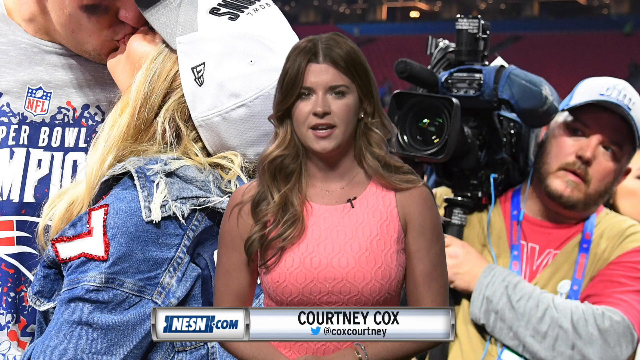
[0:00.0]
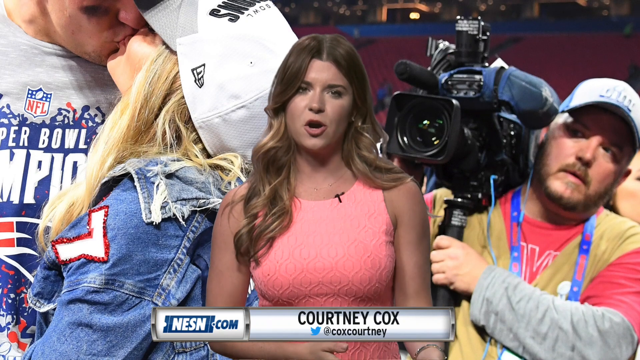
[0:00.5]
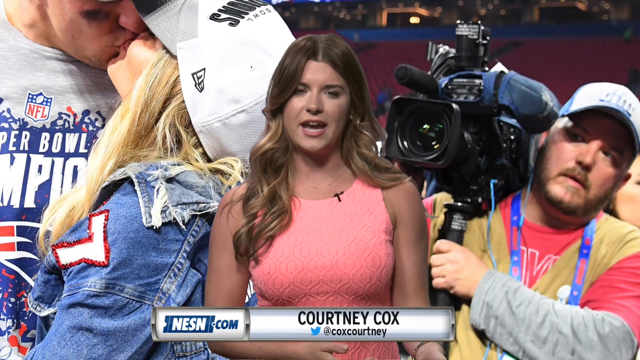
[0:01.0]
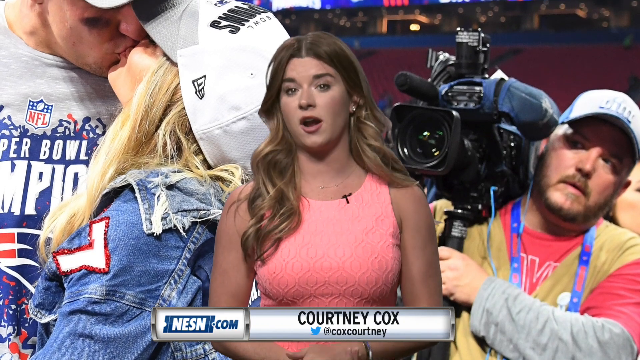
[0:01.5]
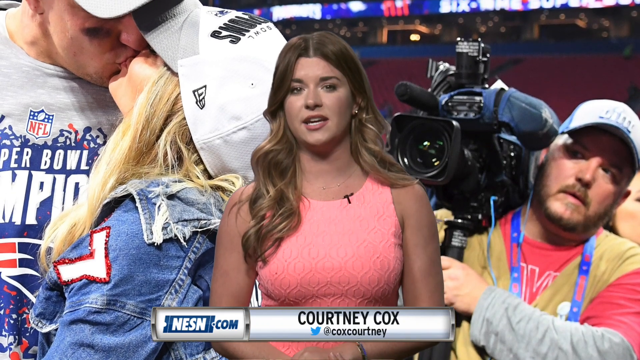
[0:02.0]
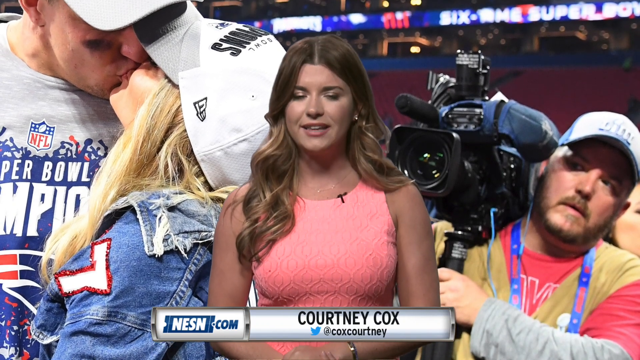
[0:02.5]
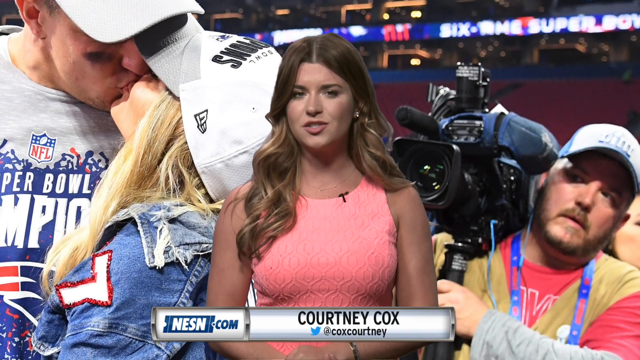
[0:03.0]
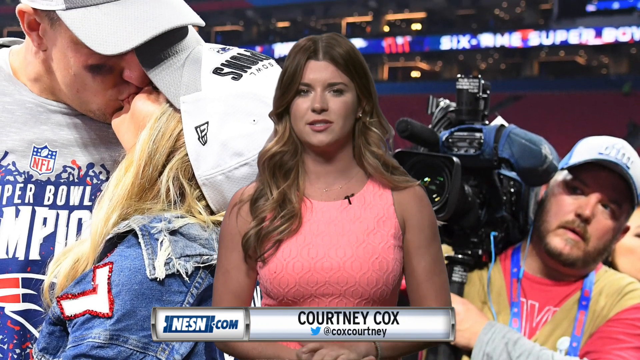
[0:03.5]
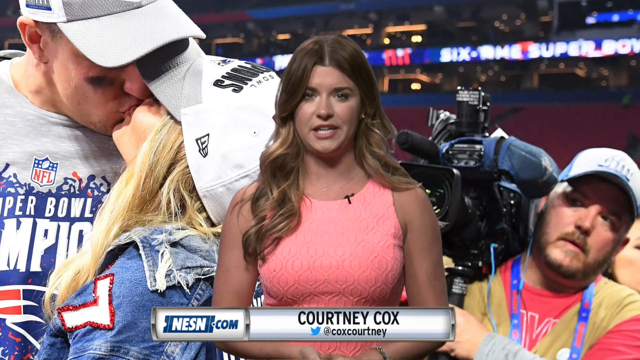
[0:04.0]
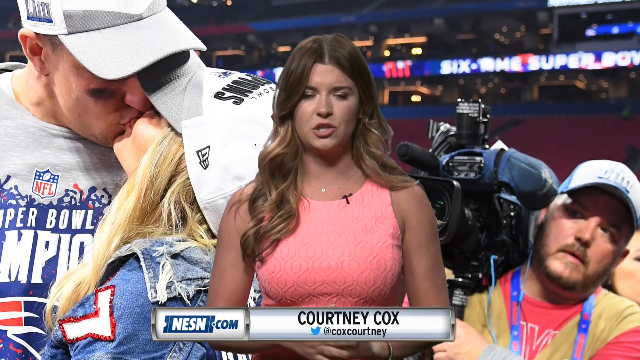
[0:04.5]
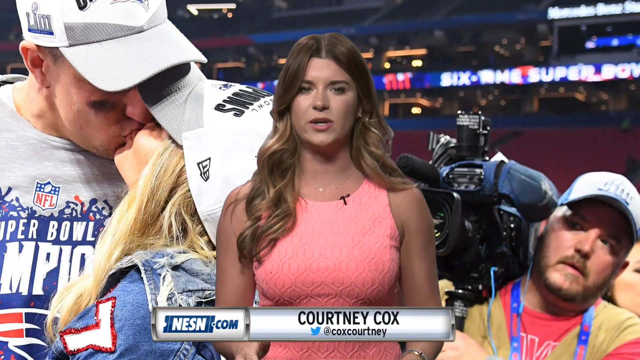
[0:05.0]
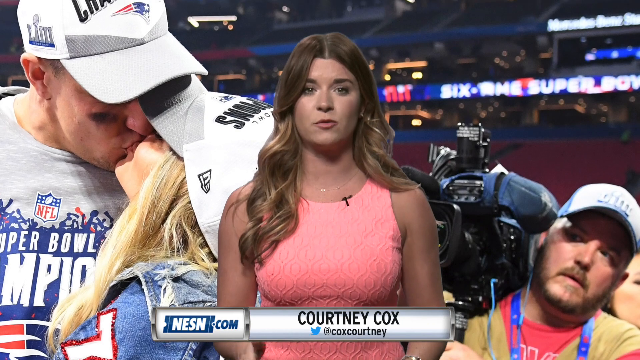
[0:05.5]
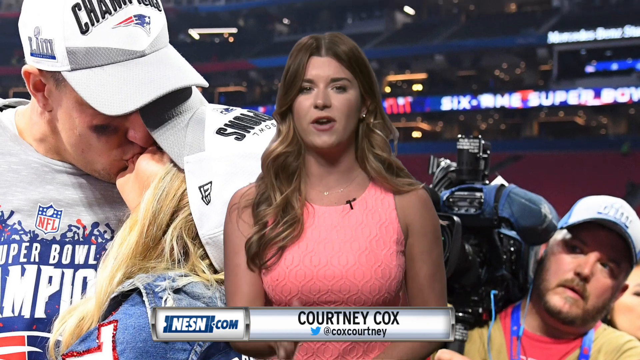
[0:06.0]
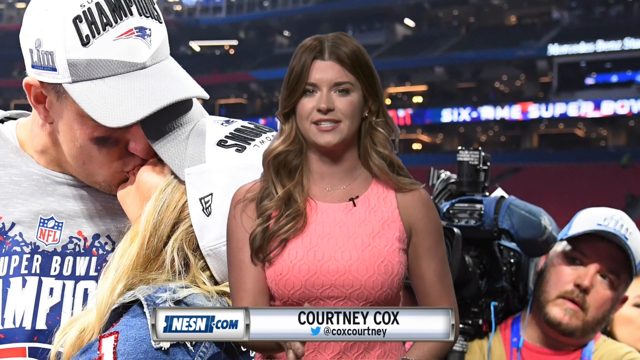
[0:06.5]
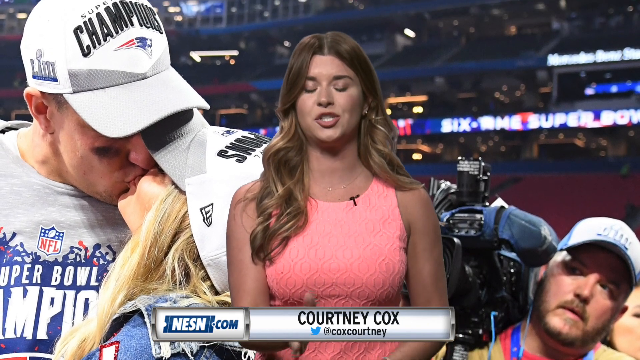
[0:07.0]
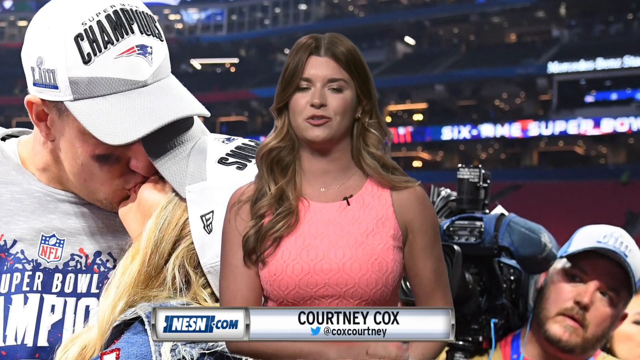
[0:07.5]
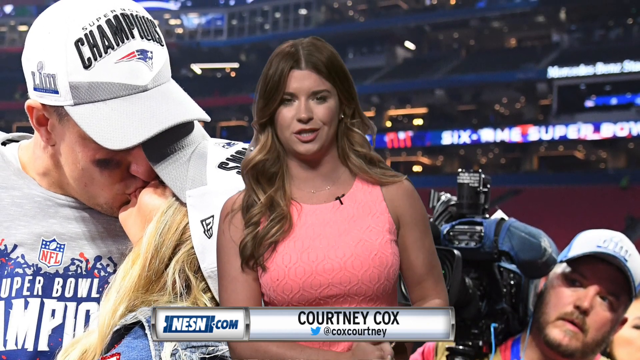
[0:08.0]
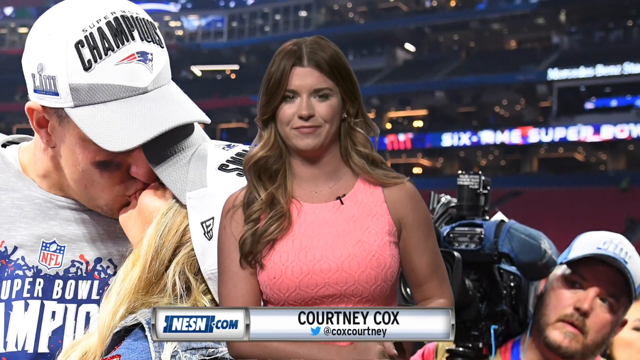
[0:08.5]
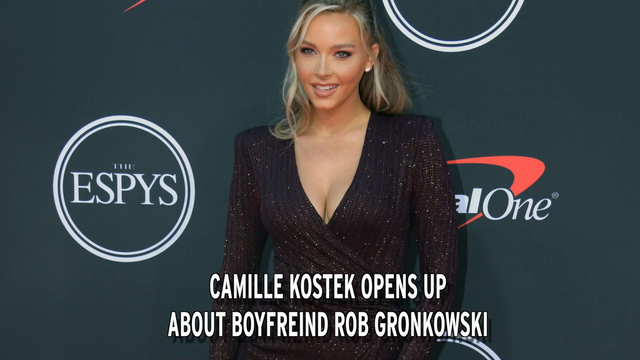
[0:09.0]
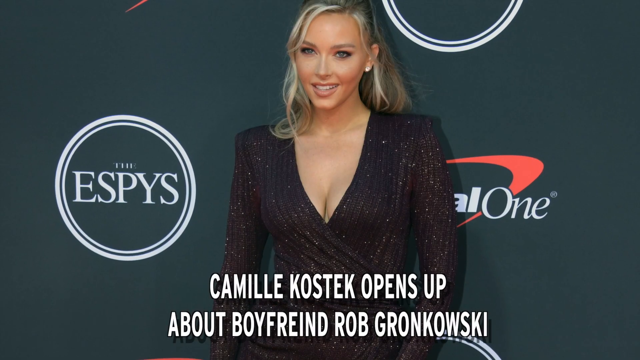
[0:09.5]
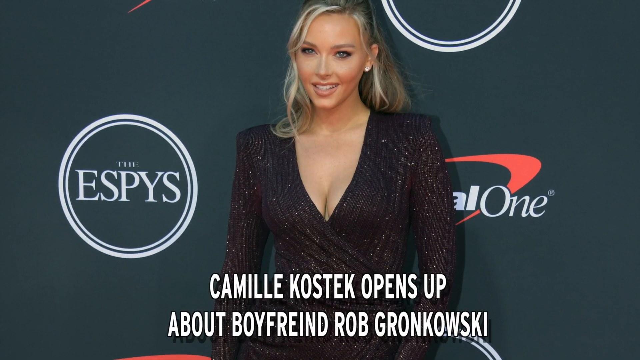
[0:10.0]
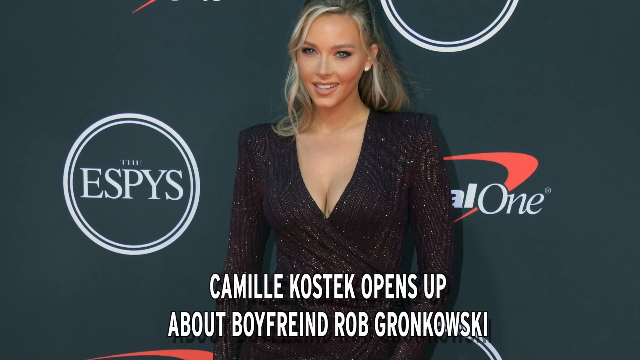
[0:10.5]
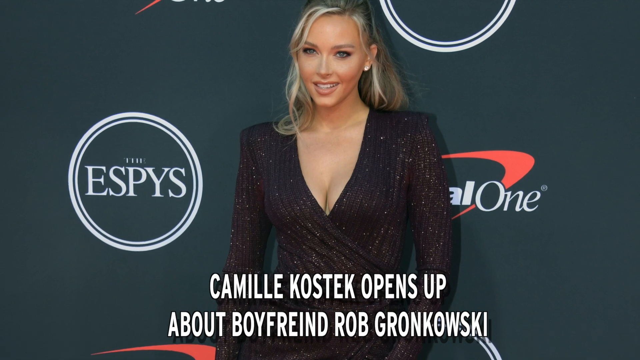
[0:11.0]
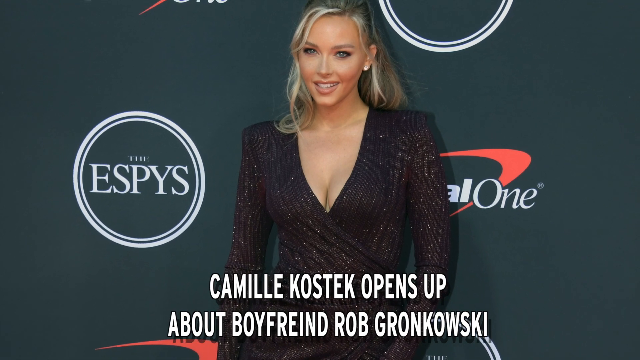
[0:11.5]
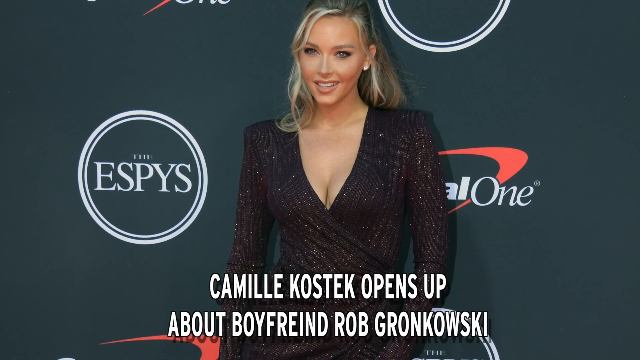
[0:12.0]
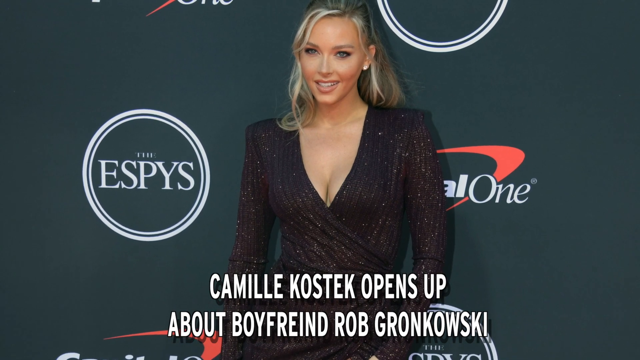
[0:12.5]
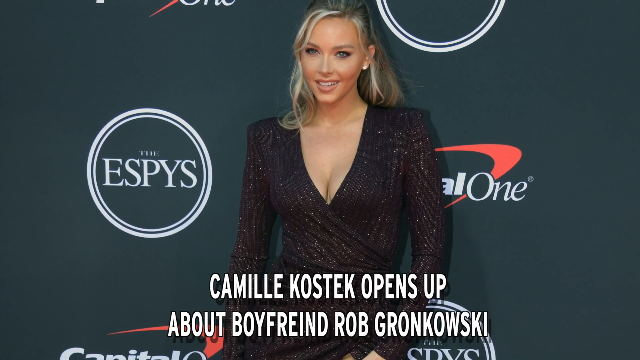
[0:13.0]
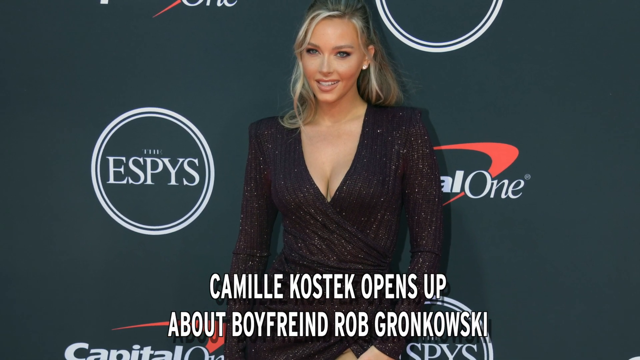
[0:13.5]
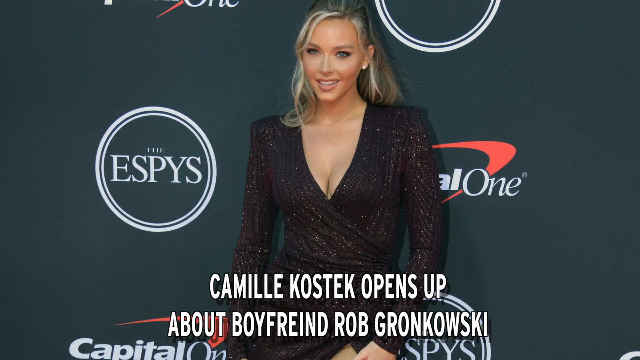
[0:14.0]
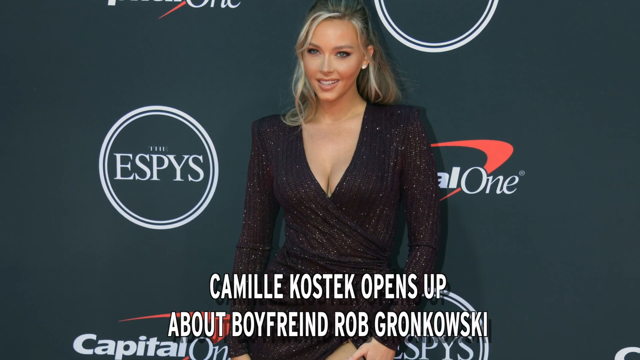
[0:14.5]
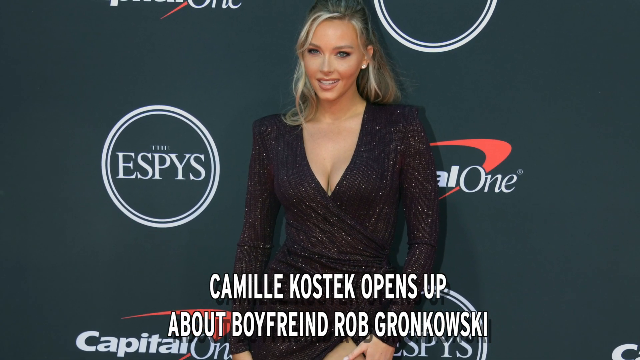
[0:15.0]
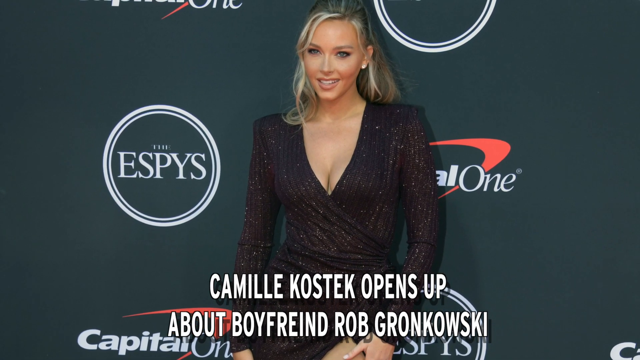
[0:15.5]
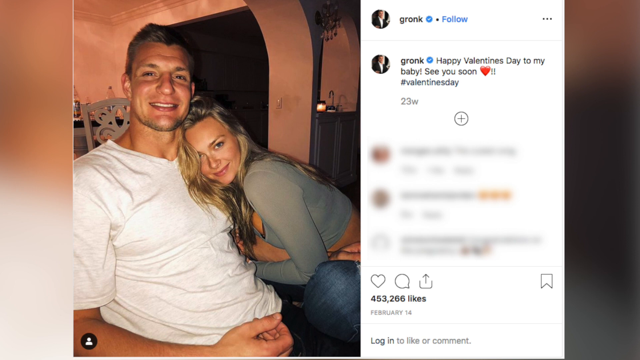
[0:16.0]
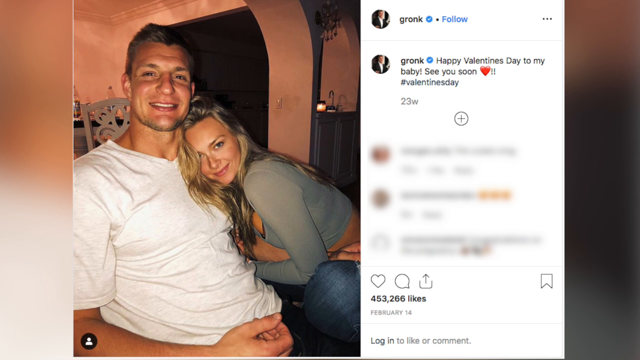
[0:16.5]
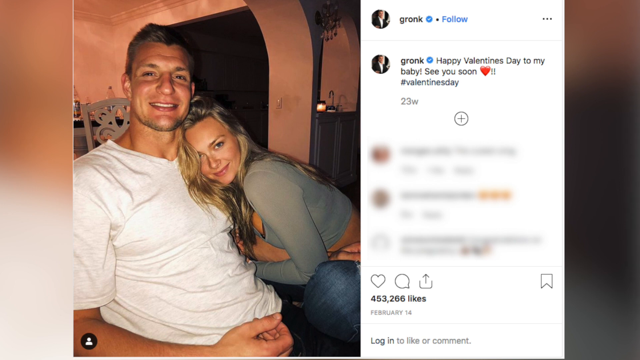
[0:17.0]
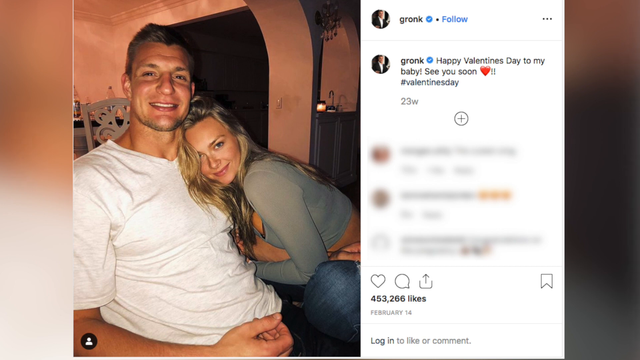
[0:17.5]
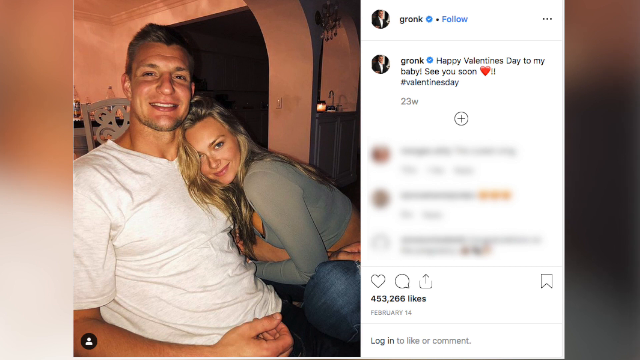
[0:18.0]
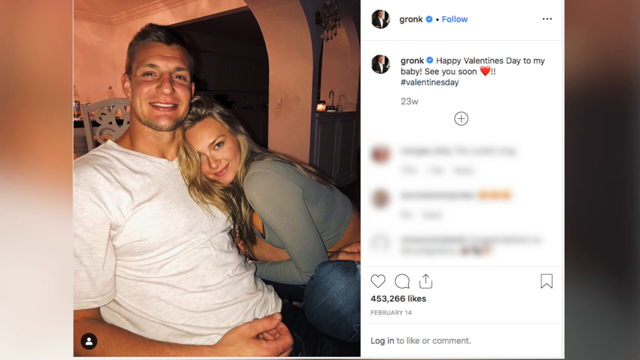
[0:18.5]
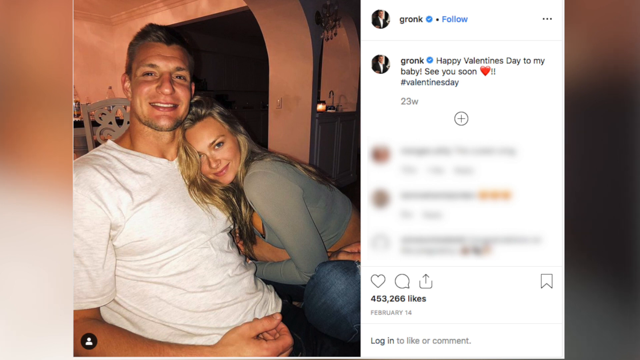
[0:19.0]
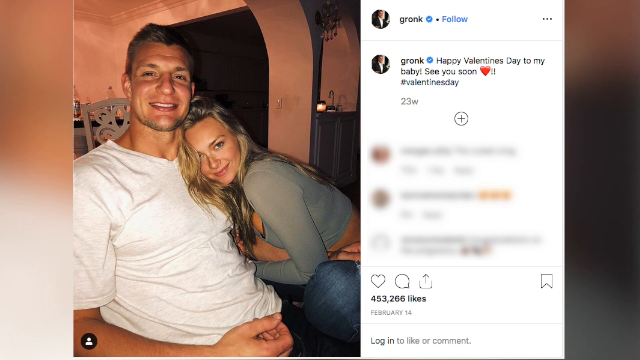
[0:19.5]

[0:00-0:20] A newscaster with dark blonde hair, wearing a pink shirt, appears on screen. A graphic at the bottom says "nesson.com," and the newscaster's name is Courtney Fox. The green screen background shows a player kissing his significant other, with a cameraman looking towards the kissing couple. The camera pans the green screen up as the woman continues talking towards the camera, gesturing with her hands at the bottom of the screen and moving them up and down throughout. The scene transitions to a woman with blonde hair in a black dress, standing in front of a screen that says "Espy's." On-screen text reads "Camille Kostik opens up about boyfriend Rob Gronkowski." The camera does a slow zoom backwards, still showing her. Next comes an Instagram post from the account "Gronk," showing a person in a white t-shirt smiling with a woman in a green shirt laying her head on his chest. The post's text says "Happy Valentine's Day to my baby. See you soon. #happy valentine's day."